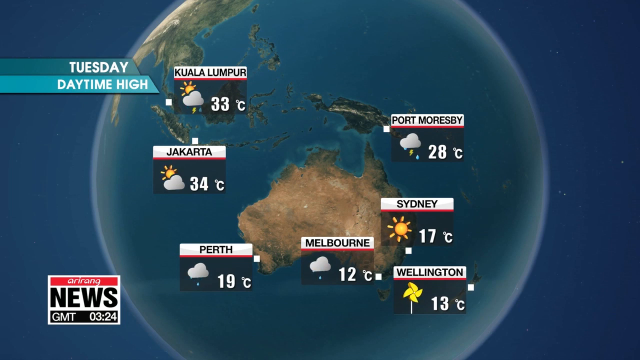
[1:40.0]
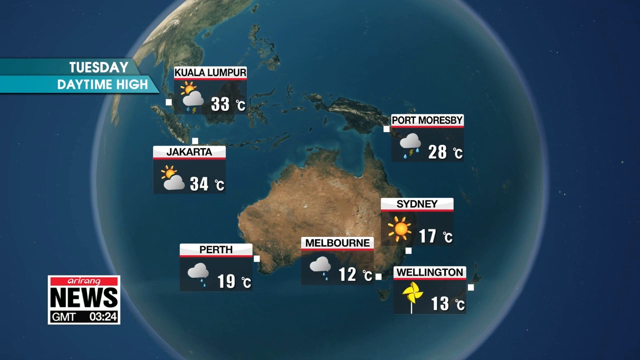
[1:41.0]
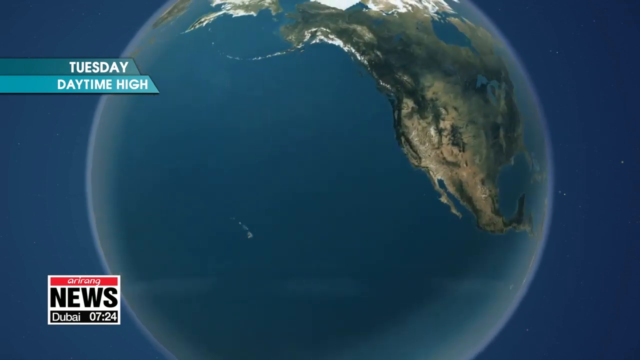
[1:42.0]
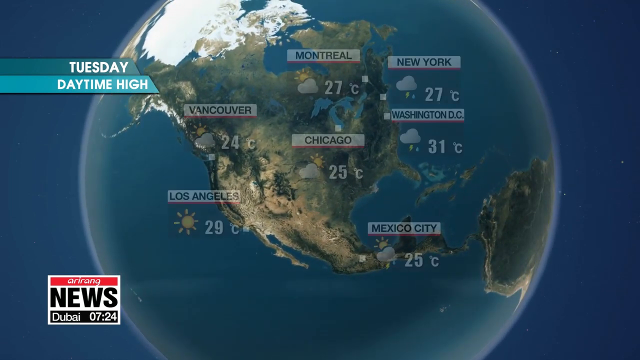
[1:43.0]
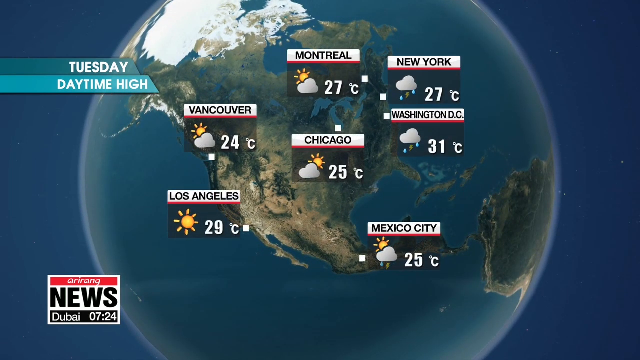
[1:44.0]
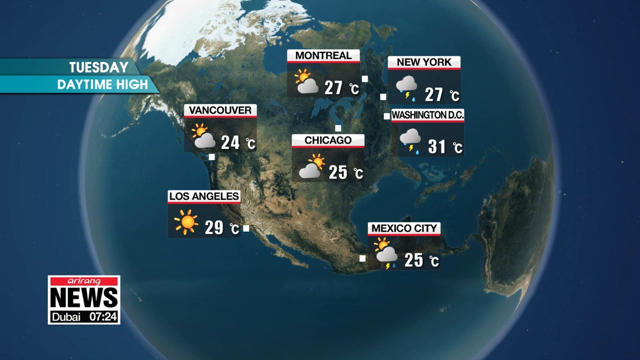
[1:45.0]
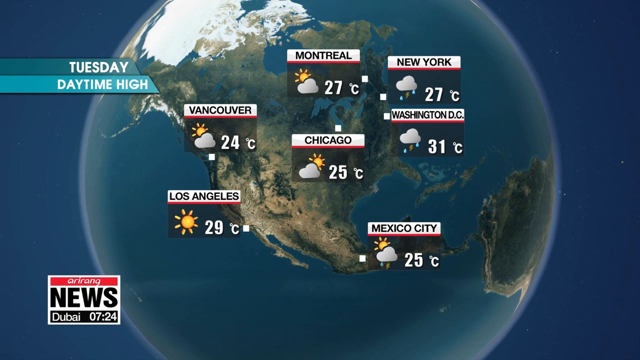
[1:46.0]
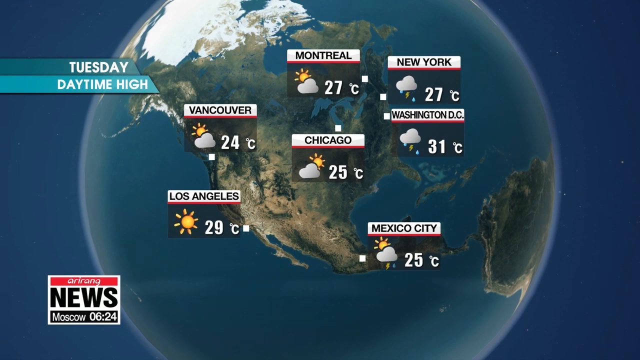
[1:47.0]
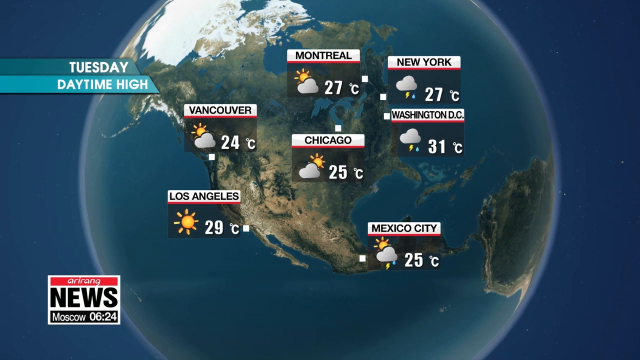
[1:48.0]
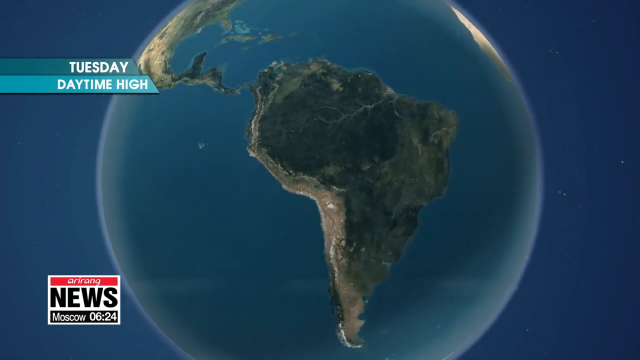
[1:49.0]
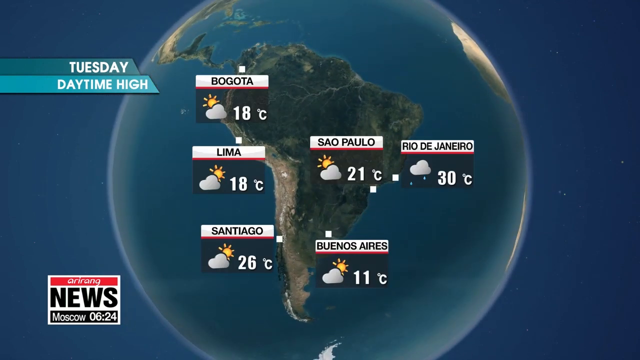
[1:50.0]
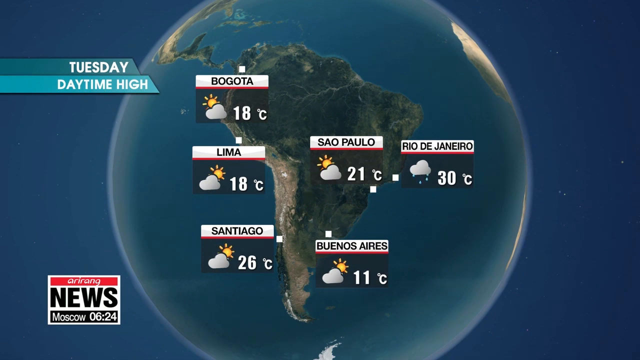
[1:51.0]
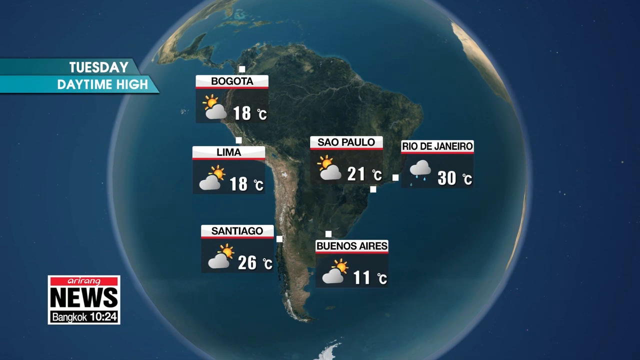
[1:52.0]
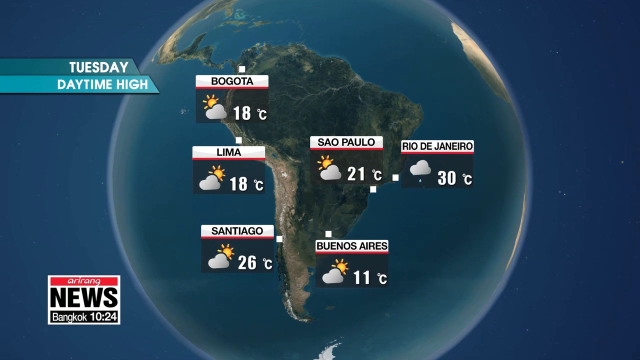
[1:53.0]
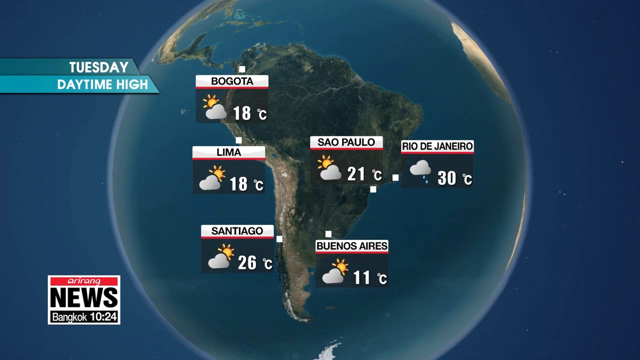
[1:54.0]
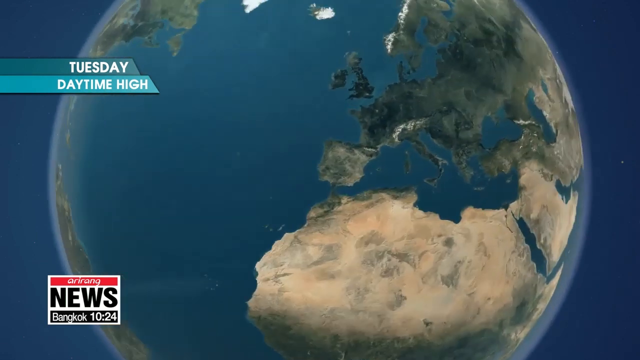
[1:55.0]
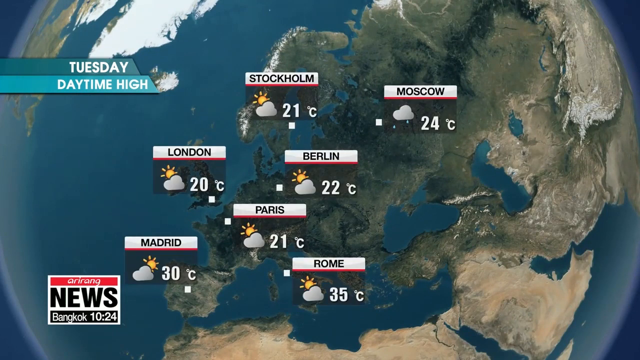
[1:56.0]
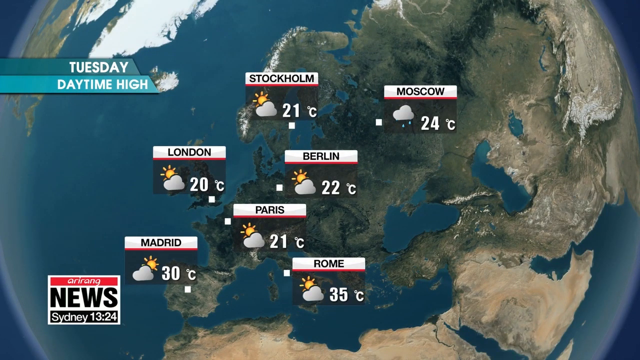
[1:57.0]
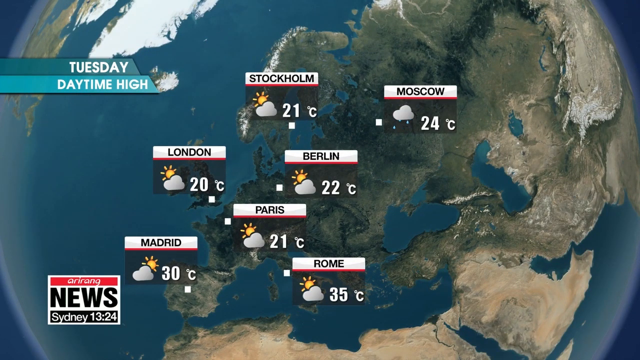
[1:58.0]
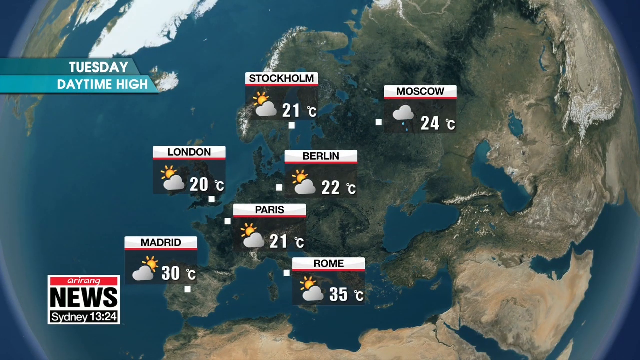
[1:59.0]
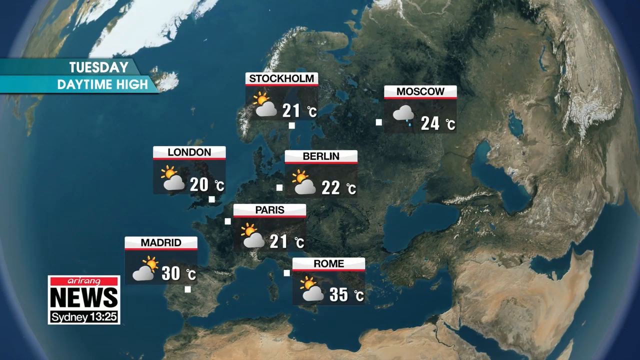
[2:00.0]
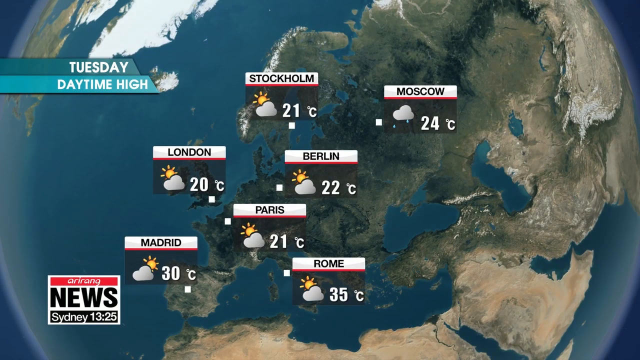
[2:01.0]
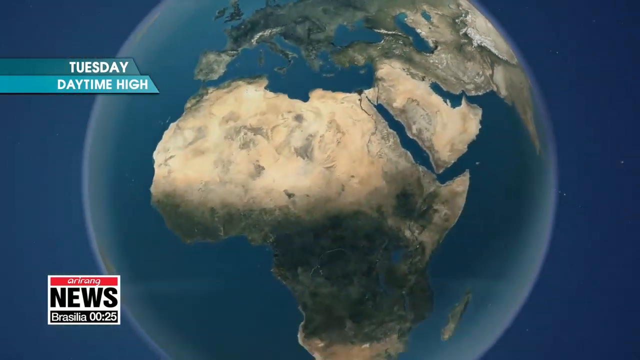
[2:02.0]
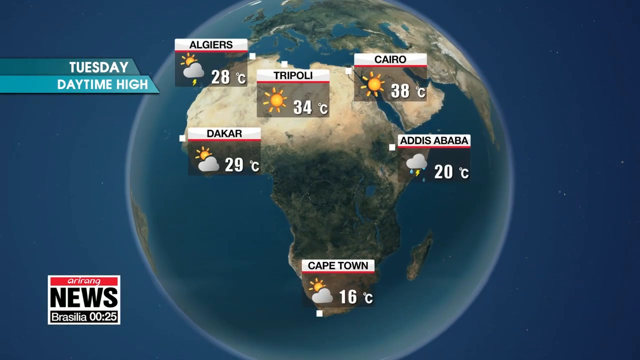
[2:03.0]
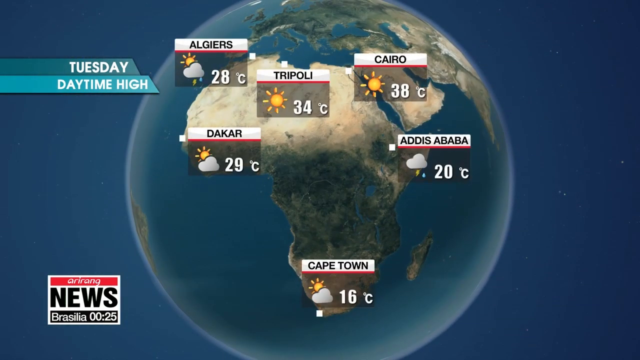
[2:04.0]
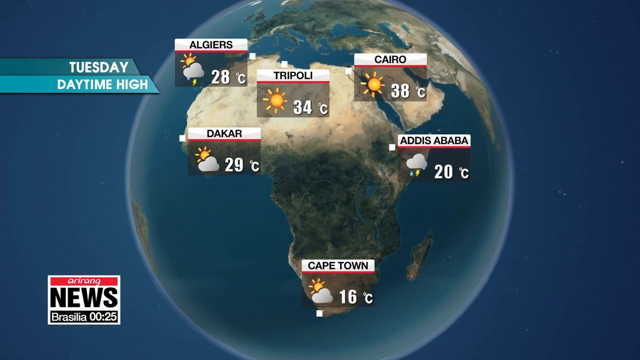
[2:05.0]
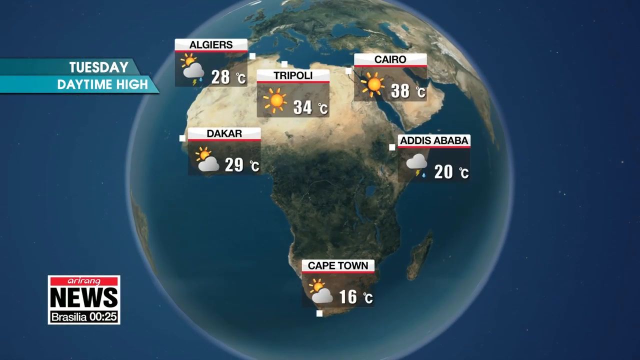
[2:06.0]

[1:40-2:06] The scene has a blue background, with a dark teal text box reading "Tuesday" justified to the left and, directly below it, a lighter teal text box reading "daytime high". In the lower left corner is the news icon, a white box with a red stripe at the top and "news" written in black, along with a black box with the world clock scrolling. On screen is a snapshot of the globe with Australia centered, showing Papua New Guinea, Indonesia and New Zealand. The globe spins to North America, and temperatures appear for Los Angeles, Vancouver, Montreal, New York, Washington, D.C., Chicago and Mexico City. It turns to South America, with temperatures for Bogota, Lima, Santiago, San Paolo, Rio de Janeiro and Buenos Aires. It spins to Europe, with temperatures including Madrid, London, Stockholm, Paris, Berlin, Moscow and Rome. The globe then fades back and down to reveal Africa, with temperatures for Algiers, Tripoli, Cairo, Addis Ababa, Dakar and Cape Town.